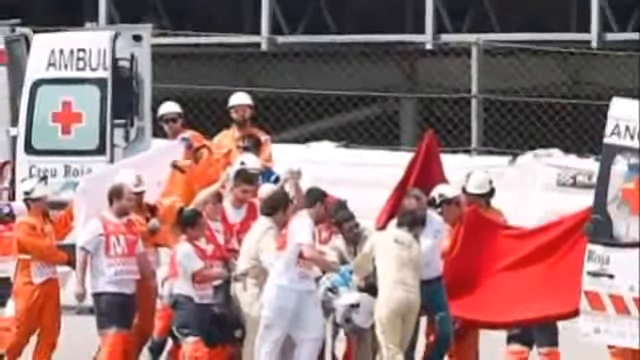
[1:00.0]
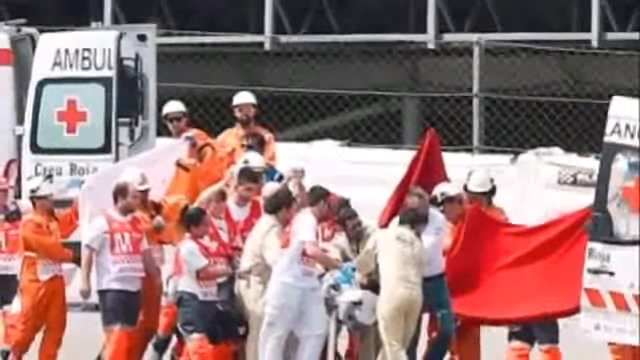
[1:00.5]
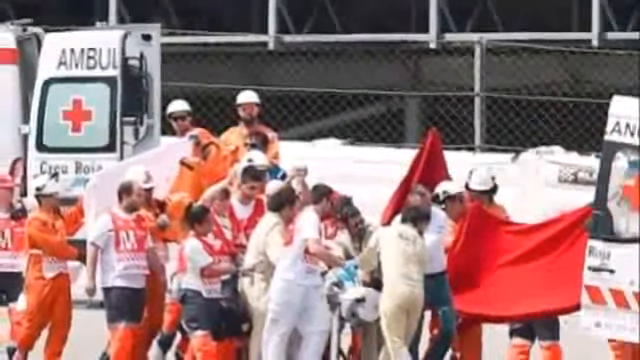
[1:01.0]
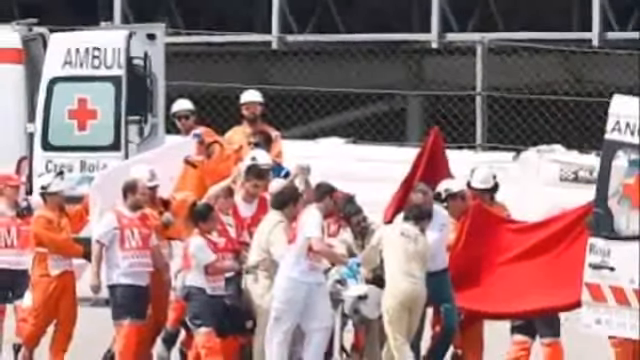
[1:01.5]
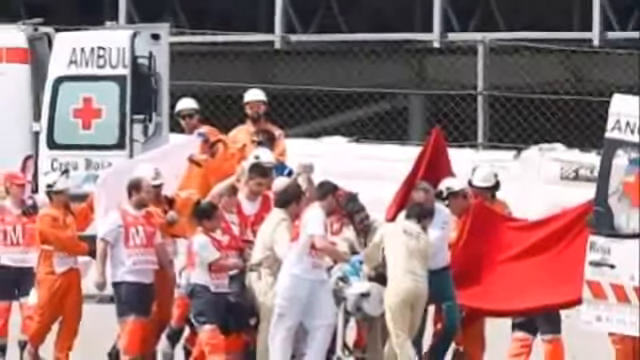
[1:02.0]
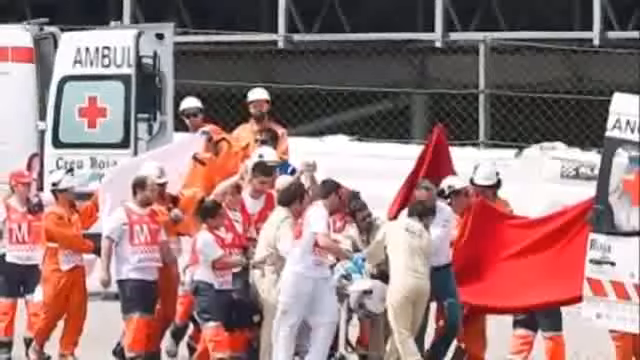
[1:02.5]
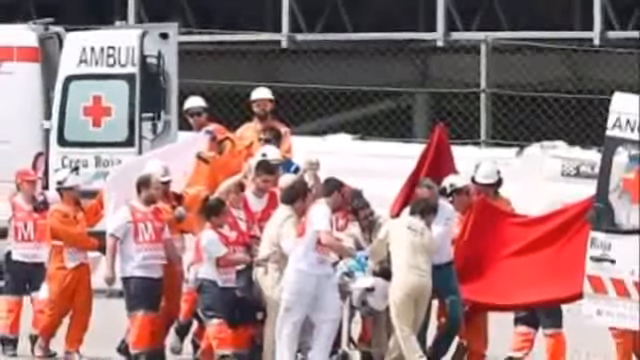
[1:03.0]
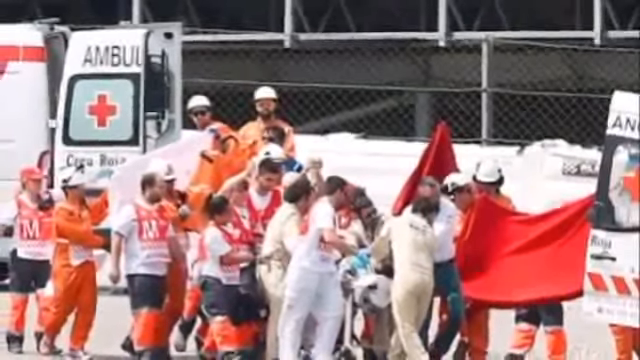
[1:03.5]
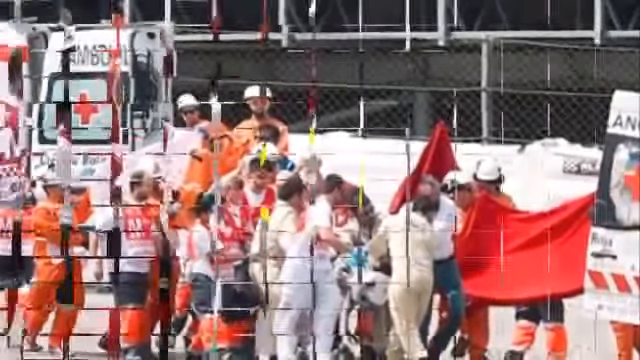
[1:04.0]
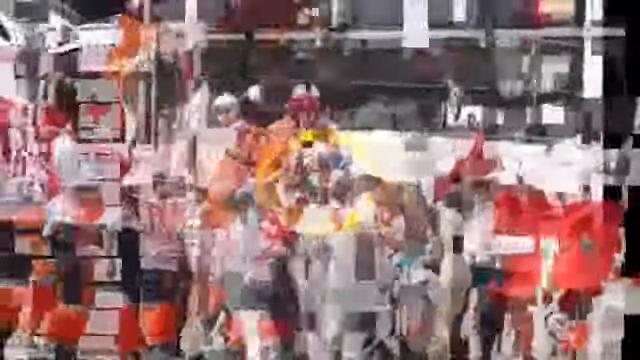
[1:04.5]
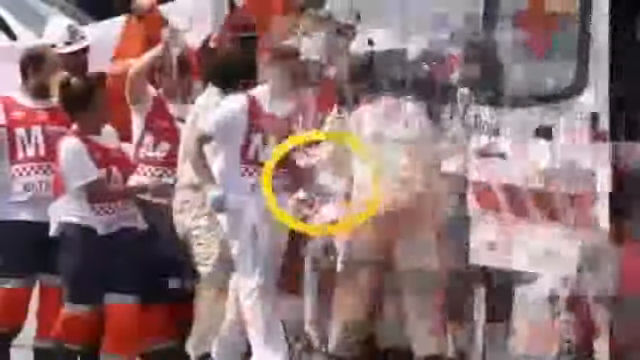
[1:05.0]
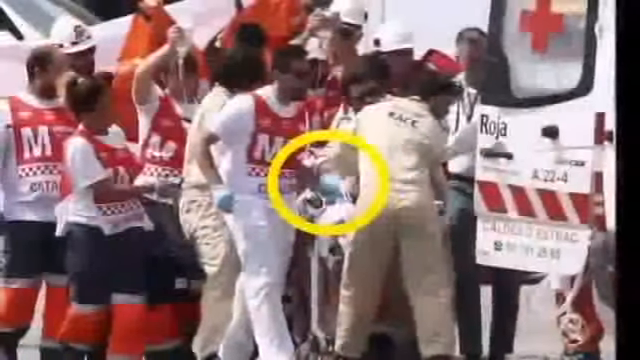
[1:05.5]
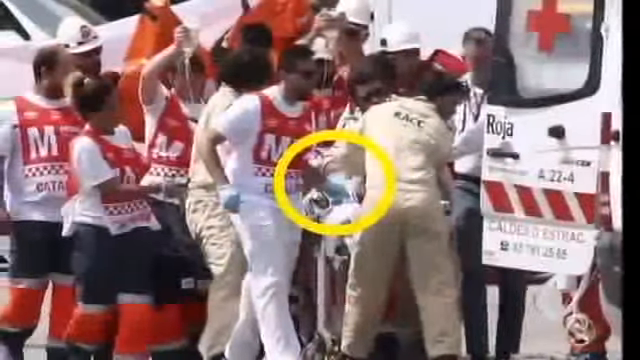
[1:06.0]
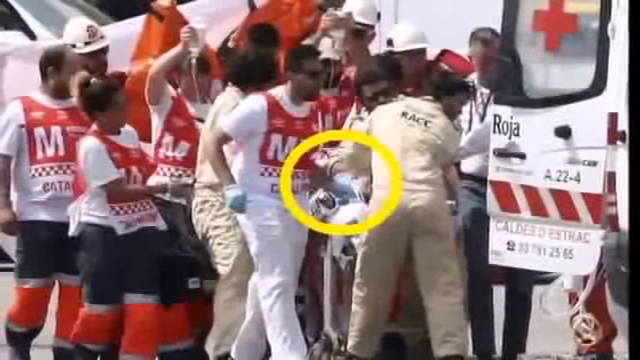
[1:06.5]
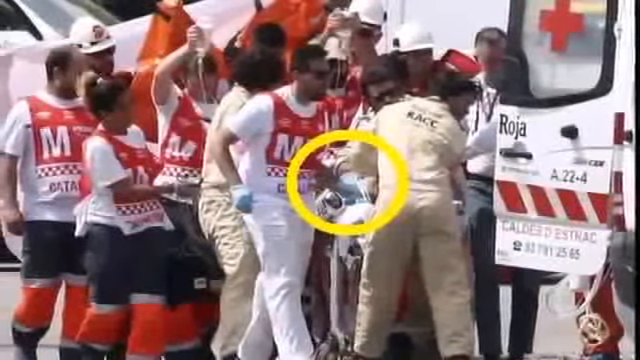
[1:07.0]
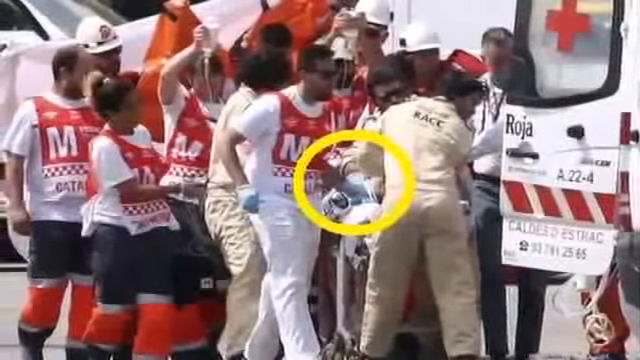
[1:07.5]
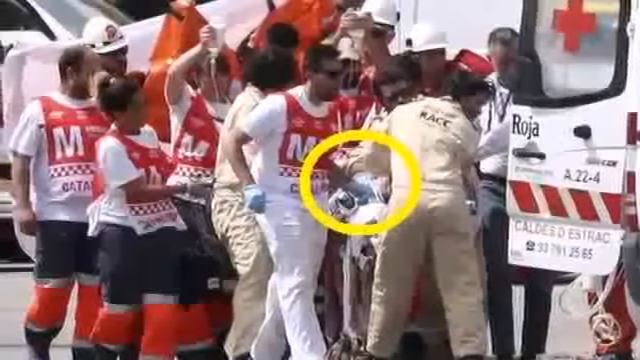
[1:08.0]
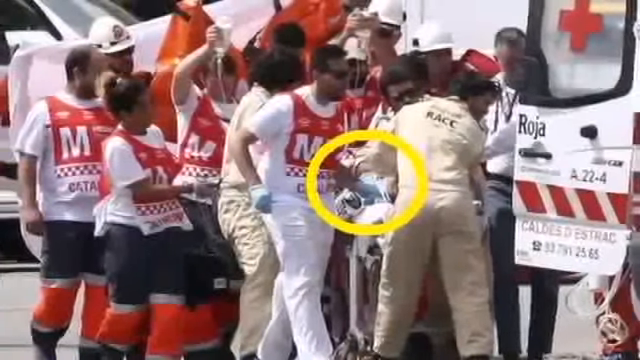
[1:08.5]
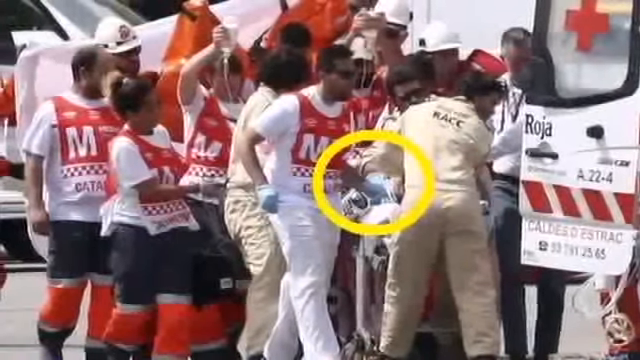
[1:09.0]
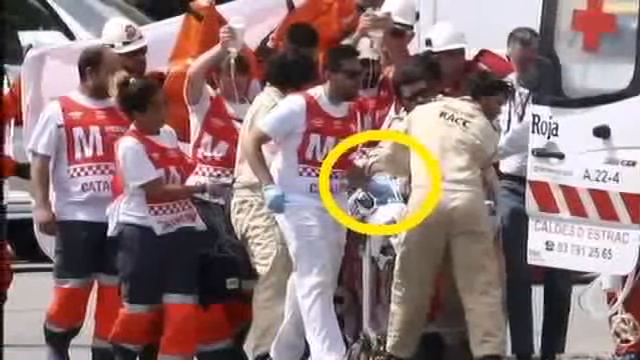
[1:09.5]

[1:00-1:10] The camera slowly pans down a still image, then a checkerboard cut follows. The yellow circle appears again; it is very blurry but seems to mark the head of the stretcher. Medical personnel hold what appear to be IV bags, have Ms on their vests, and wheel the person into an ambulance. The ambulance has a Red Cross symbol and a red and white door; it says "Roja", with what looks like a telephone number underneath. In the background, people wheel the stretcher into the ambulance, some hold IV bags, some wear medical gloves, and others are still in their orange shirts.